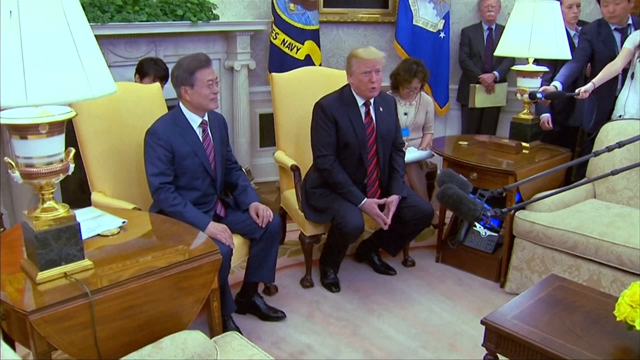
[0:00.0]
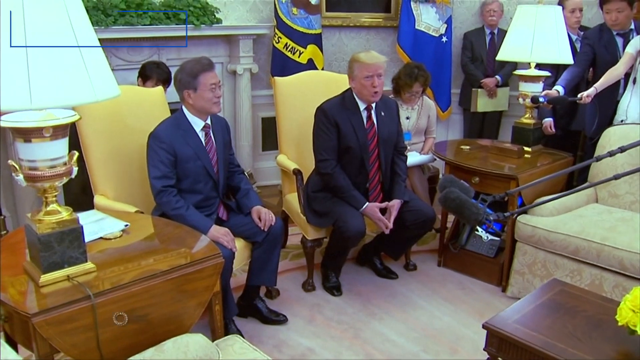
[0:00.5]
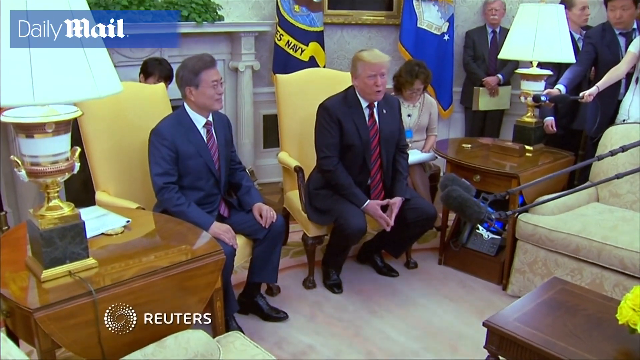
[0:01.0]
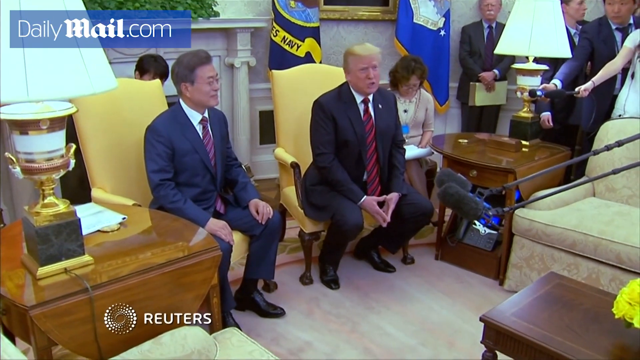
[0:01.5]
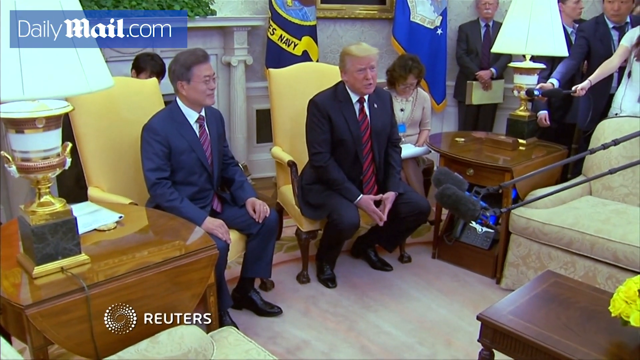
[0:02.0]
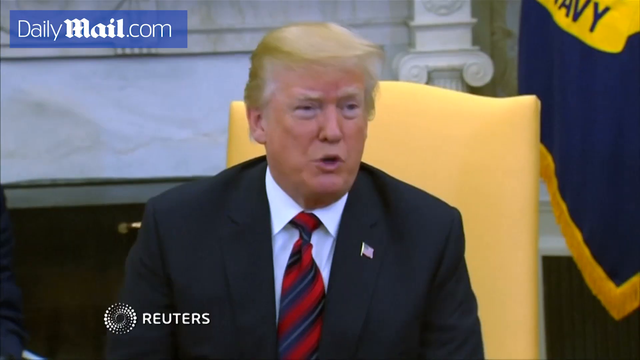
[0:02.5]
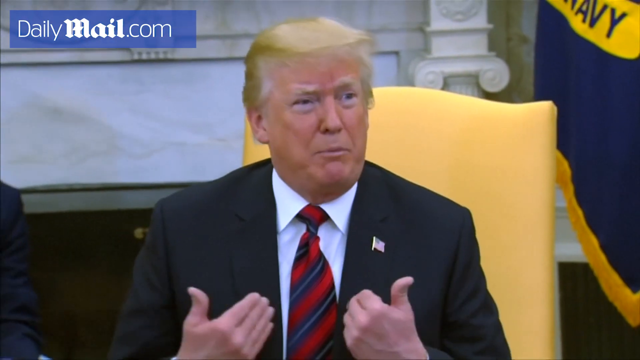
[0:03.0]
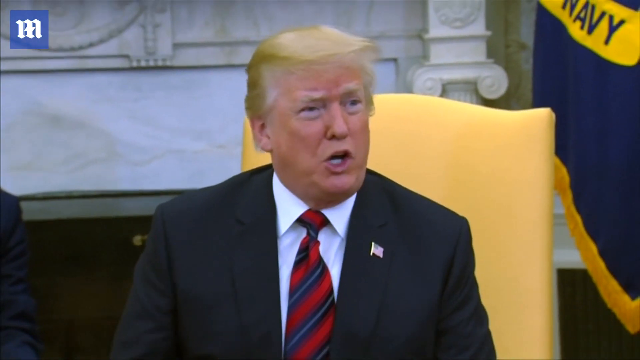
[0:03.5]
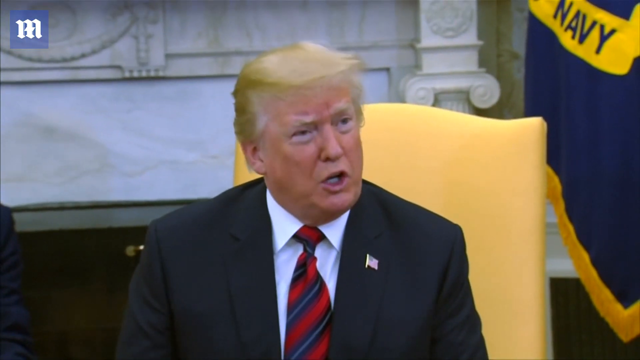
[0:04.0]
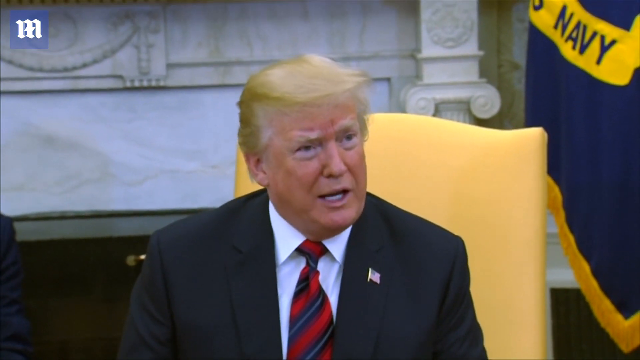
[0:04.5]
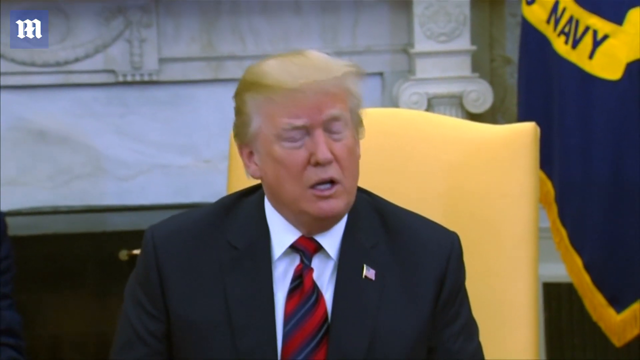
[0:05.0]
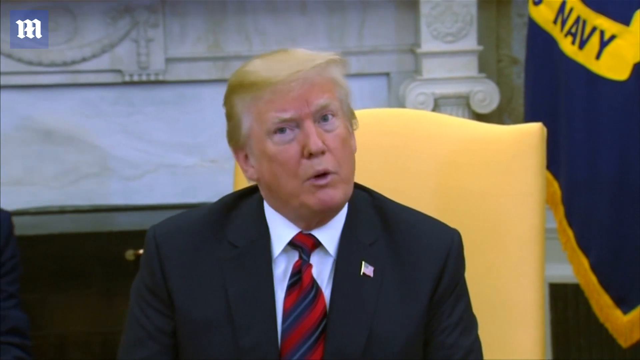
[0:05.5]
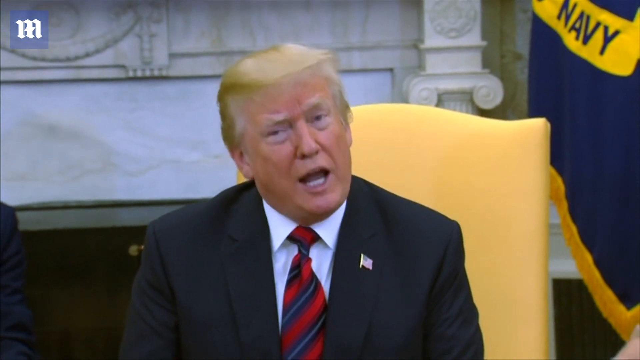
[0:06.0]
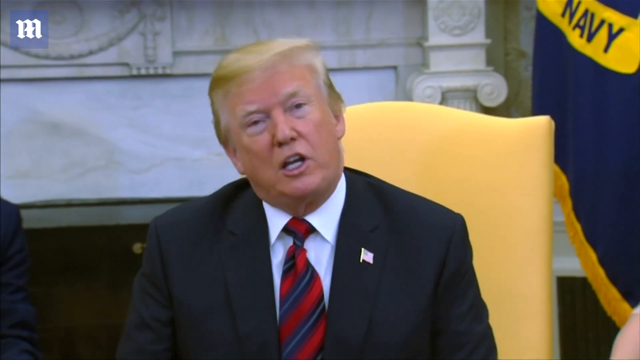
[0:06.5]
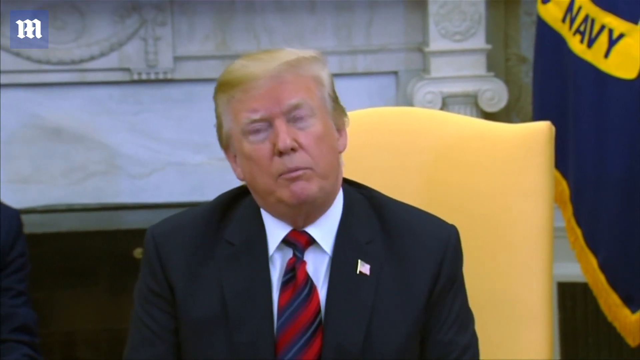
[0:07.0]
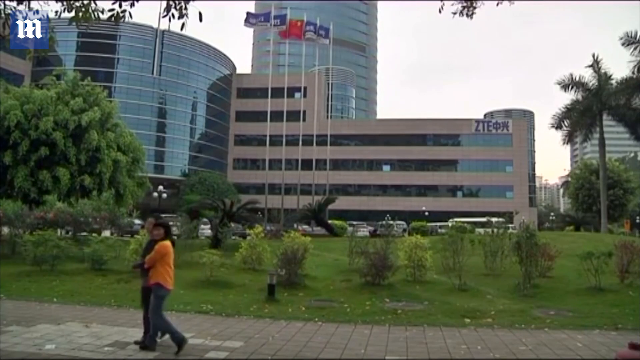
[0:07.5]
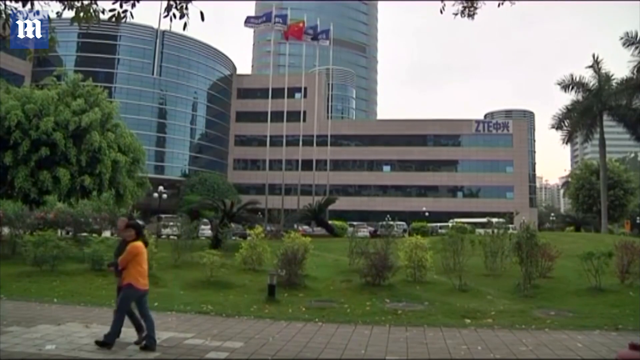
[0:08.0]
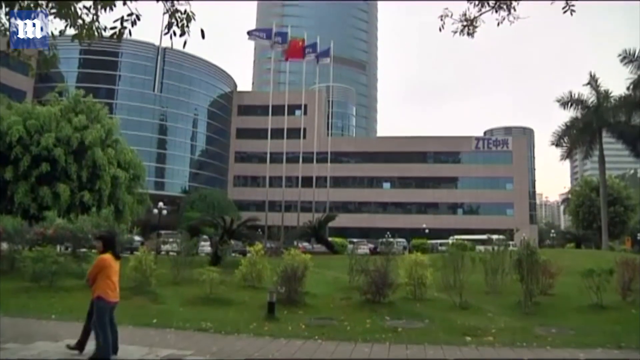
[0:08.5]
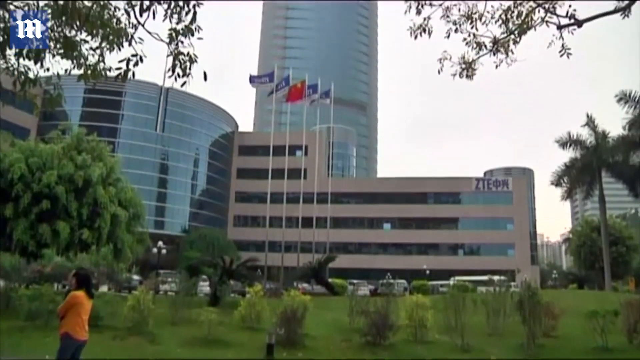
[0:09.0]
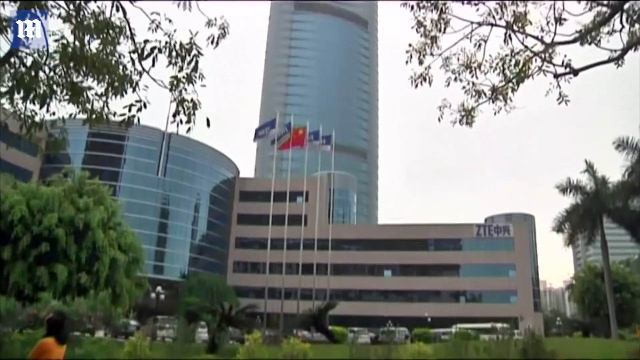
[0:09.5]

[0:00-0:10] Donald Trump, the US president, is in a meeting with a gentleman on his left, and they appear to be deliberating on issues. He seemingly shows a tower. Trump wears a black suit with a white shirt and a black and white tie, and the other man, on his right, wears a black suit and a white shirt.